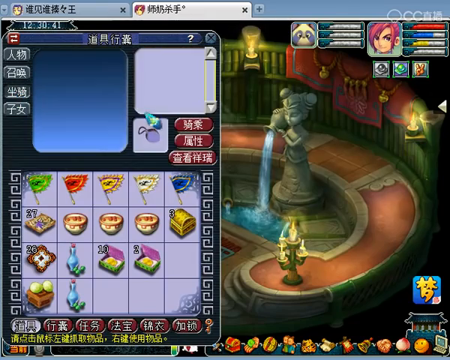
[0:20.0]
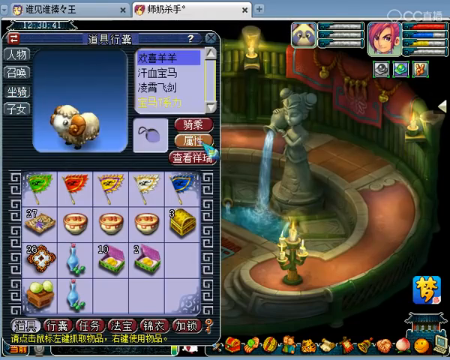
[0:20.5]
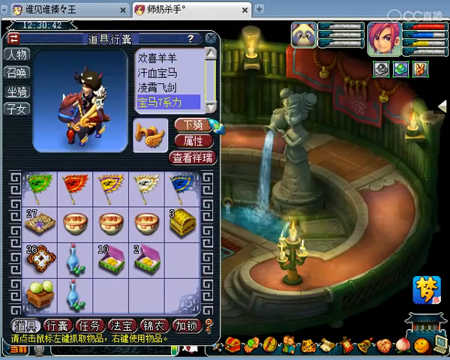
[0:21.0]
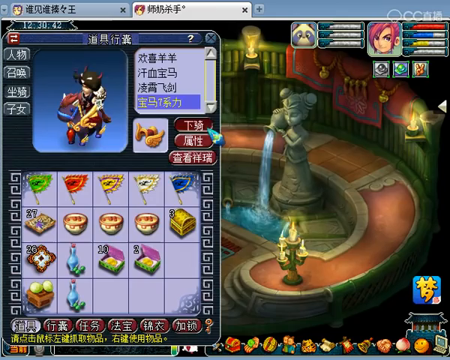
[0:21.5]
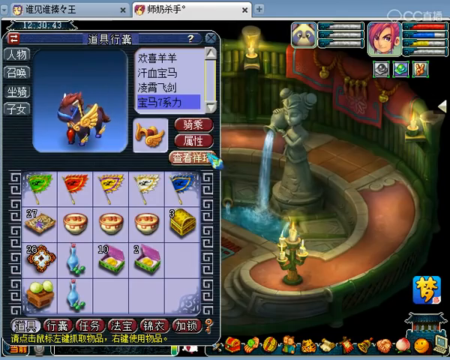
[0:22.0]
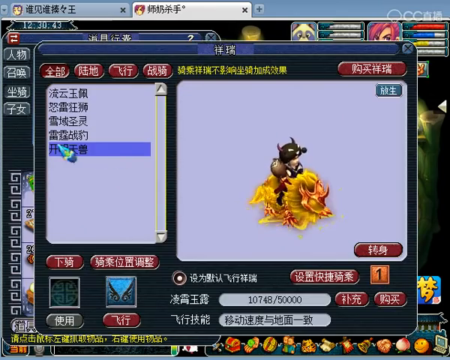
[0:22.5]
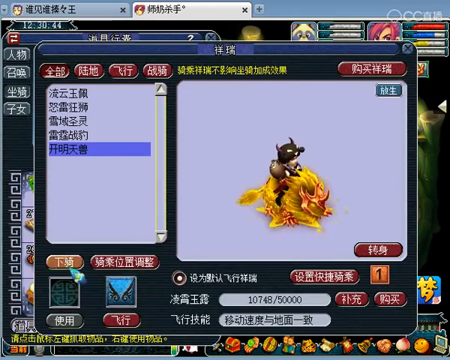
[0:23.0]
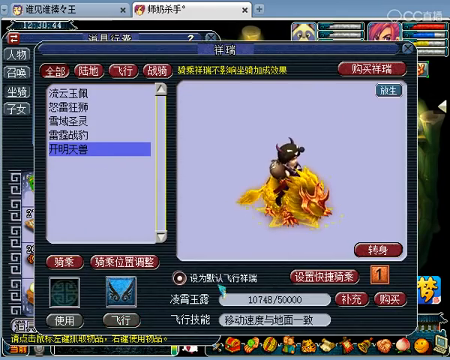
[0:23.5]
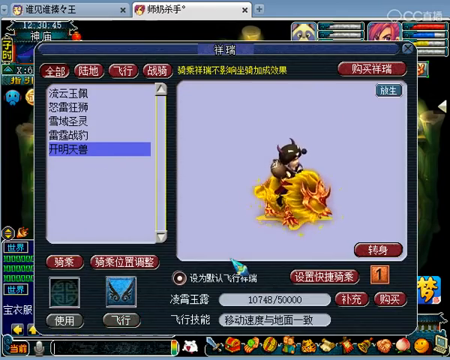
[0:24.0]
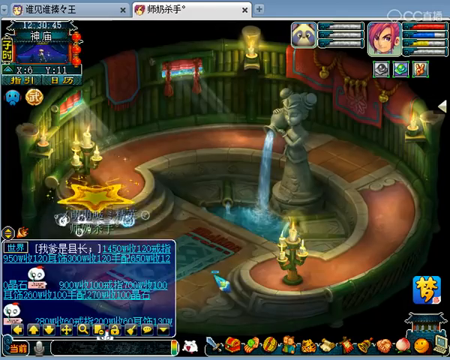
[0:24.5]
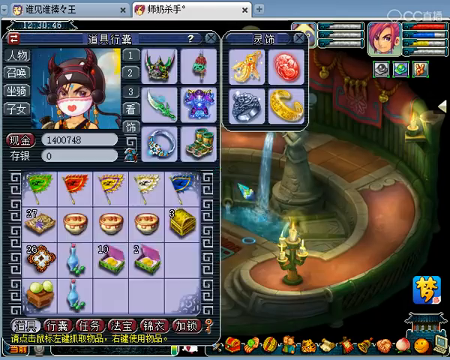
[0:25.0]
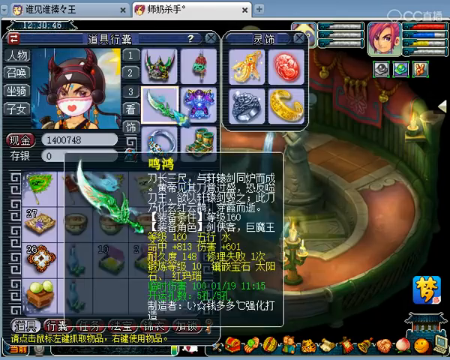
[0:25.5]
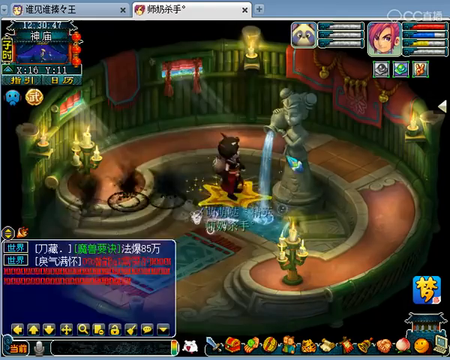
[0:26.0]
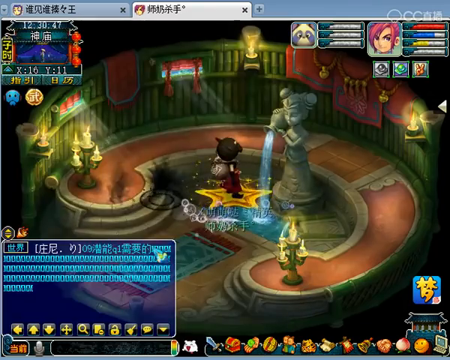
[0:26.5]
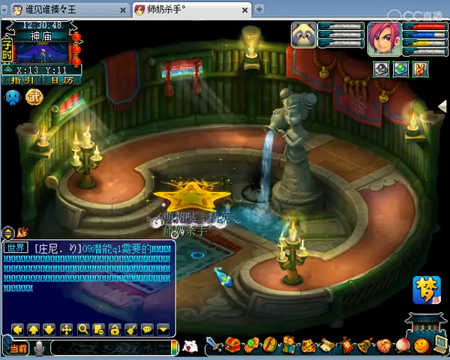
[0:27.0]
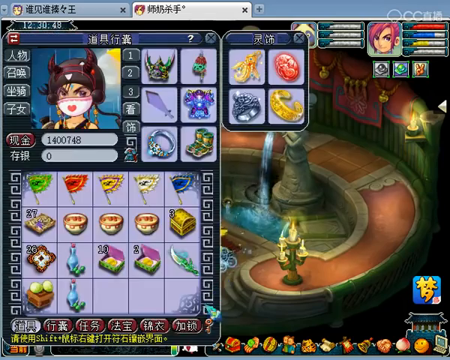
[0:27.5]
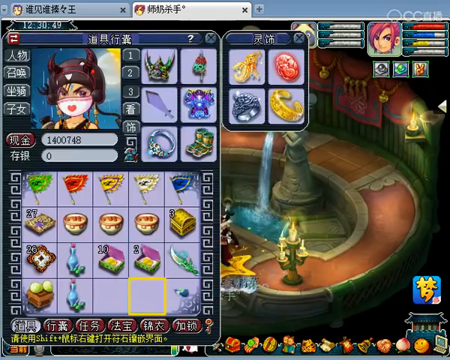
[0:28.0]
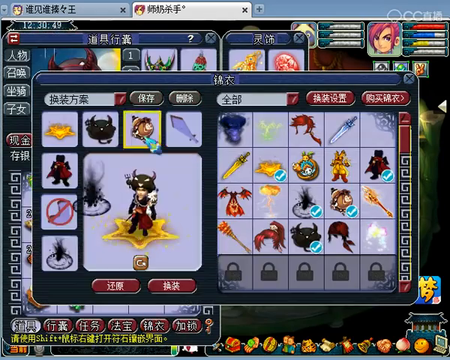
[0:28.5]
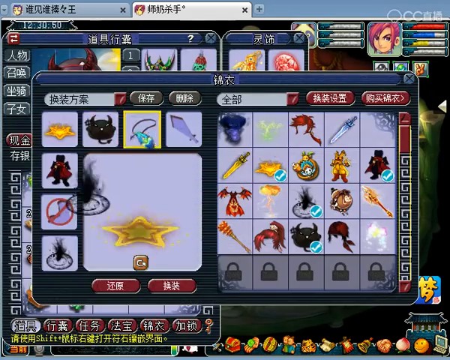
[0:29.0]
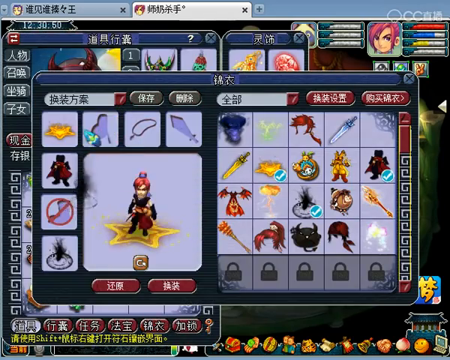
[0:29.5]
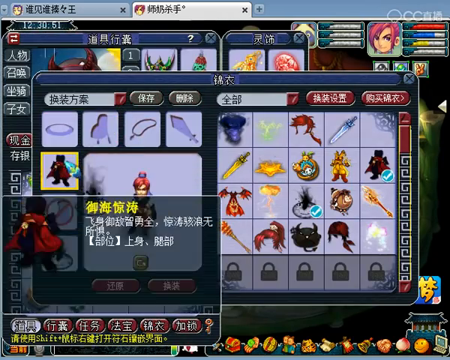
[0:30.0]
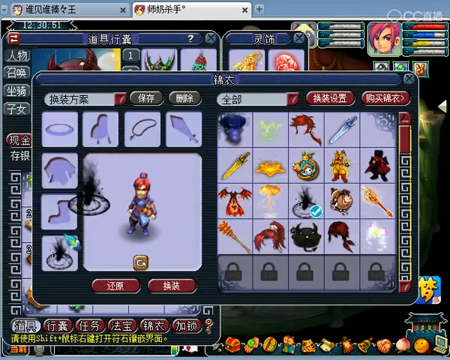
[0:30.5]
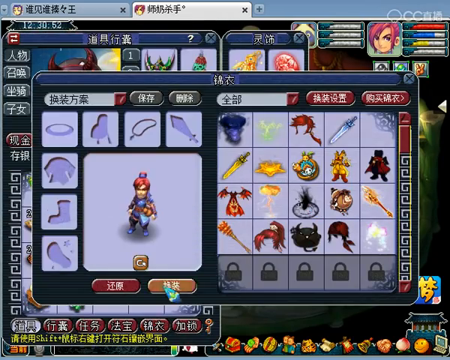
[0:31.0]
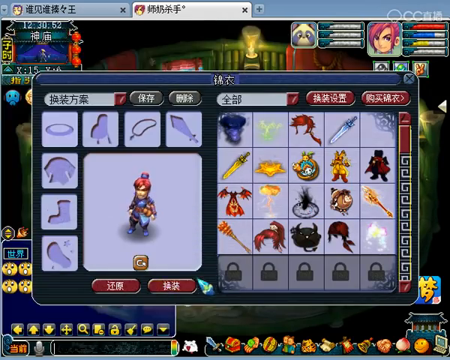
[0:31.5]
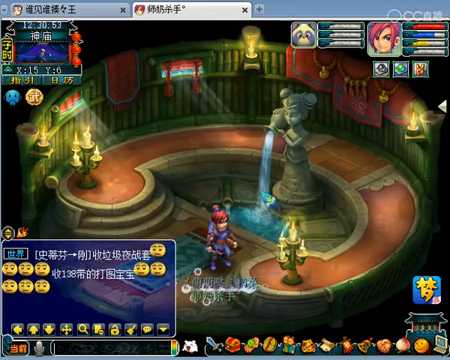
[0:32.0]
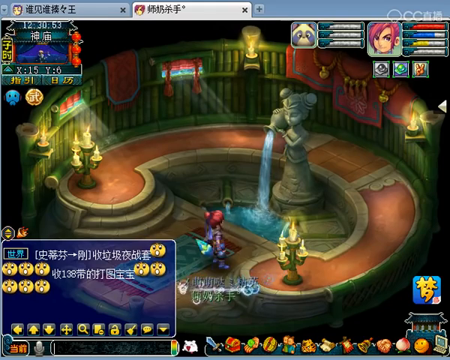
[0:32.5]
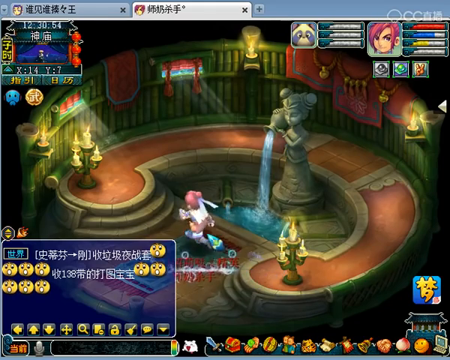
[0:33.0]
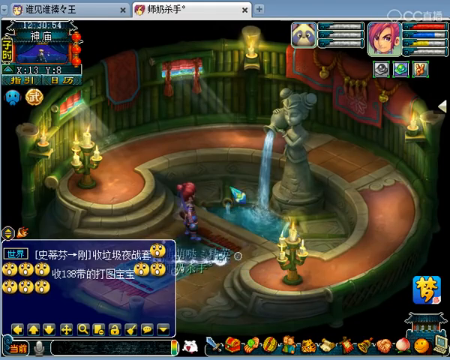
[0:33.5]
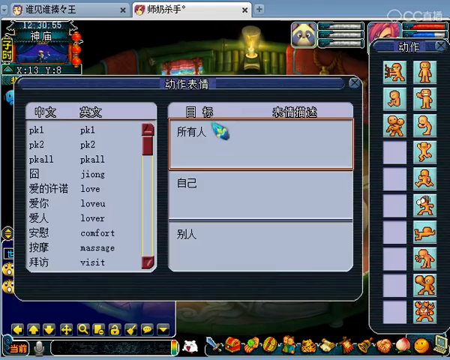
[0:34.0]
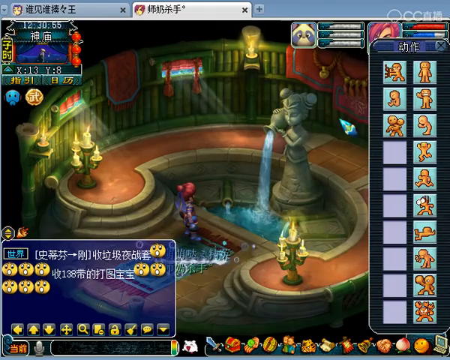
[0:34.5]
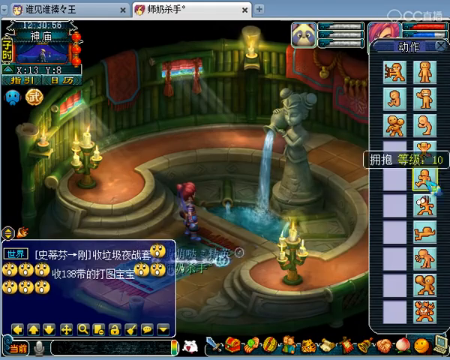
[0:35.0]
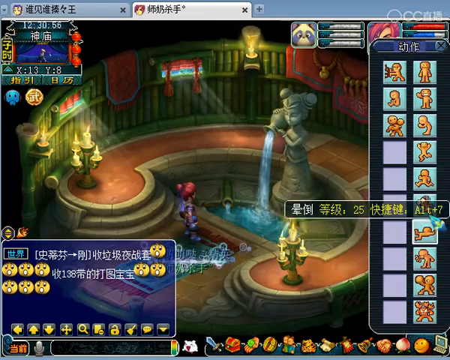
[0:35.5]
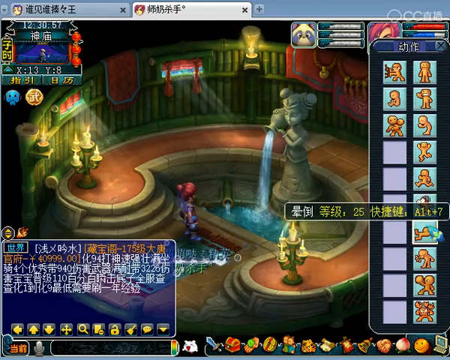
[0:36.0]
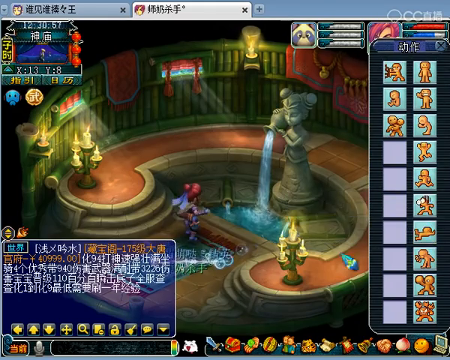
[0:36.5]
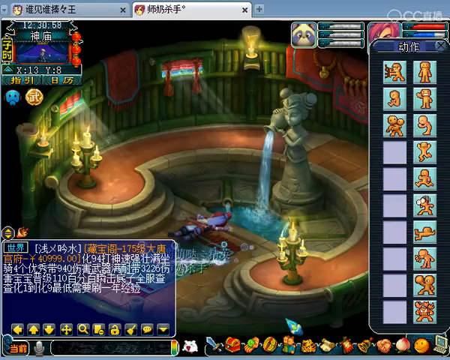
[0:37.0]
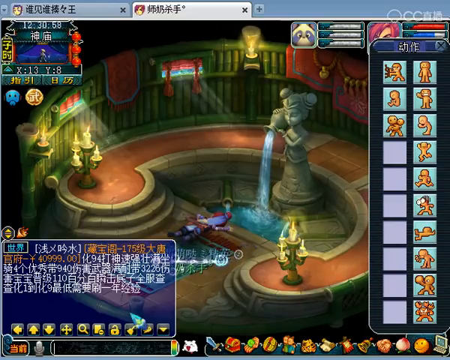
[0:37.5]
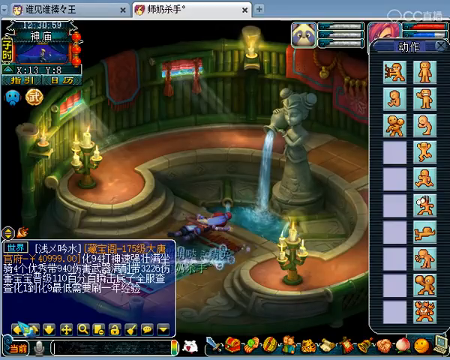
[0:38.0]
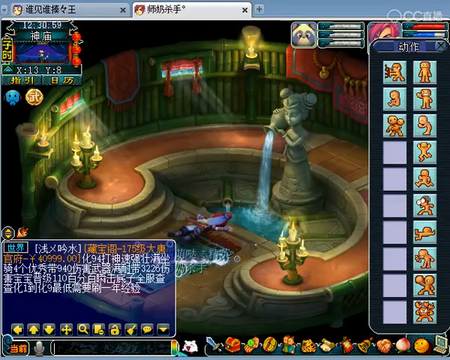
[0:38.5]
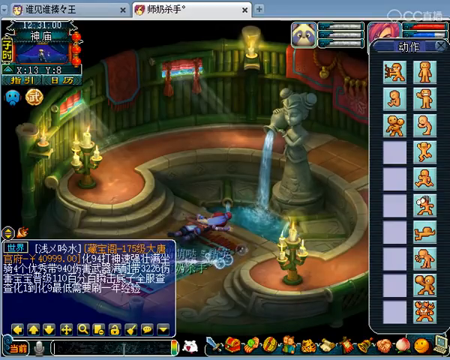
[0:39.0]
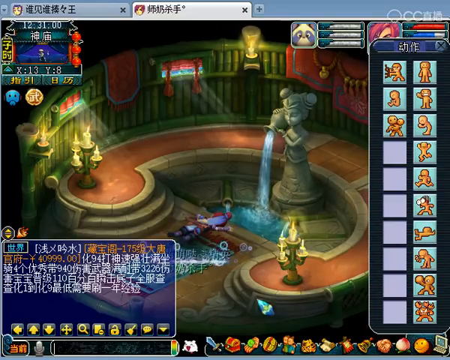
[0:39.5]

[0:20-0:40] The gameplay continues, with the mouse cursor moving around a lot as the player goes through the menus quickly. The cursor looks shiny and mystical, with a bright, light green blade, a small, pale whitish-yellowish handle, and a blue sheath handle that is not very big. What looks like the player character wears a black outfit and has red hair. He has on a black hat shaped like a black ghost with a face on it, which looks evil and has a bat face or bat shape. He then takes the hat off and removes all of his armor, leaving the character without accessories; the character is still clothed but has no hats or anything else on.